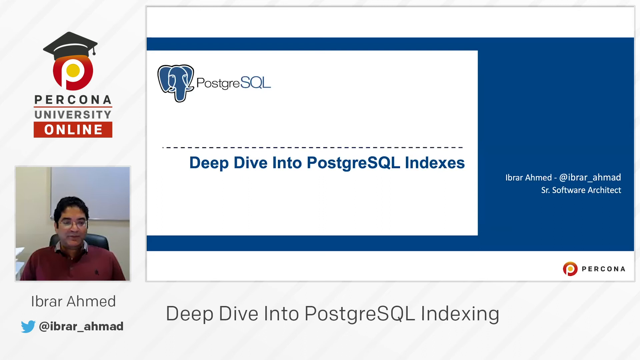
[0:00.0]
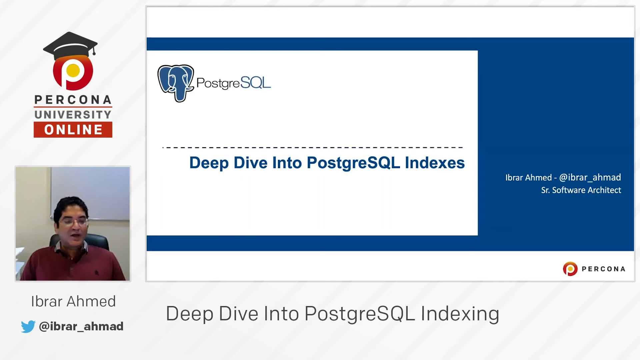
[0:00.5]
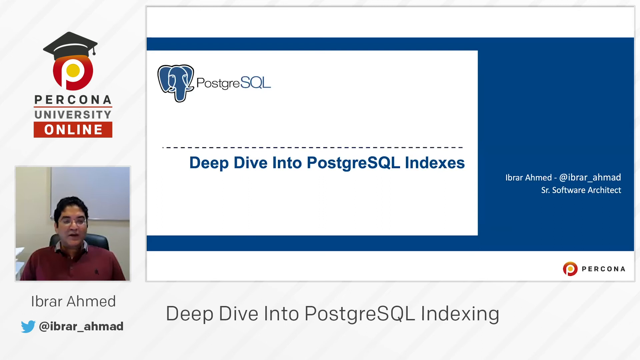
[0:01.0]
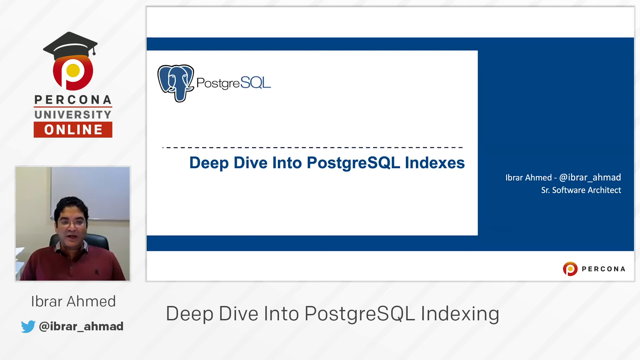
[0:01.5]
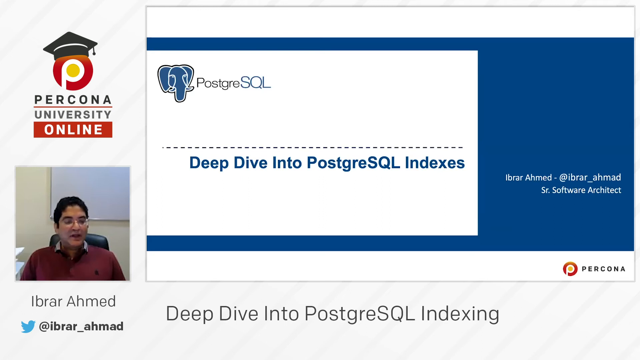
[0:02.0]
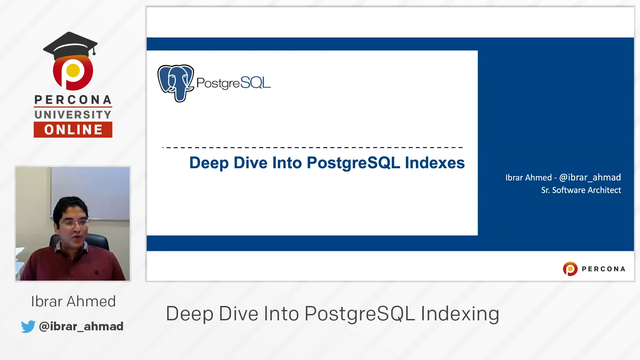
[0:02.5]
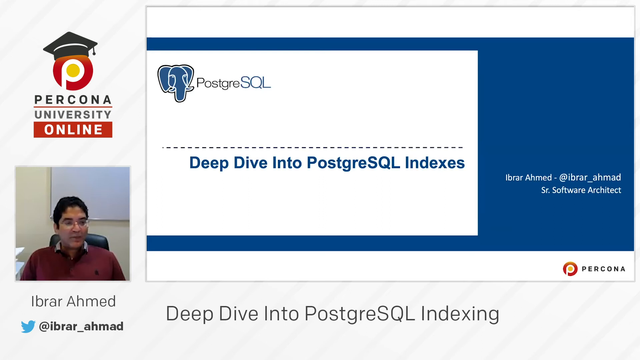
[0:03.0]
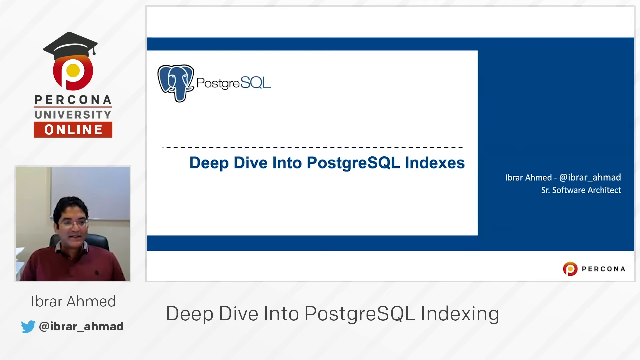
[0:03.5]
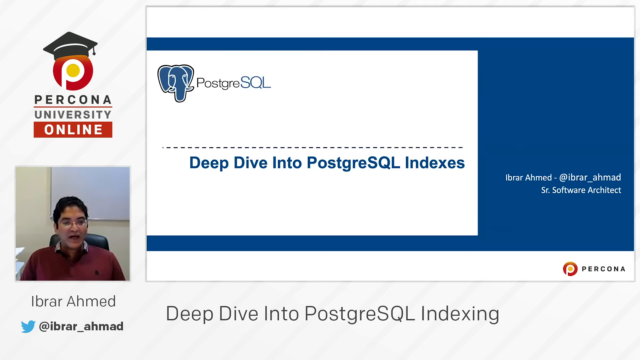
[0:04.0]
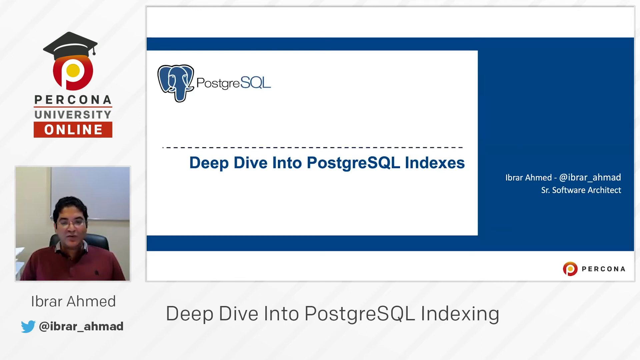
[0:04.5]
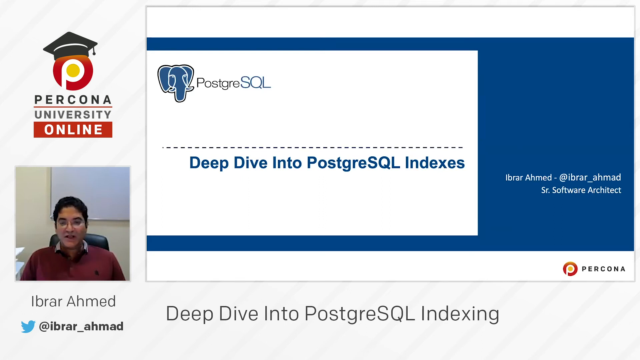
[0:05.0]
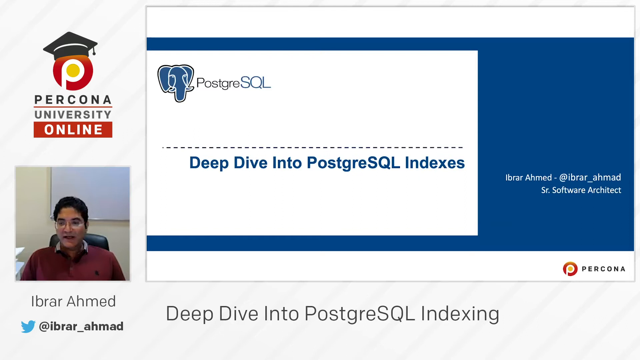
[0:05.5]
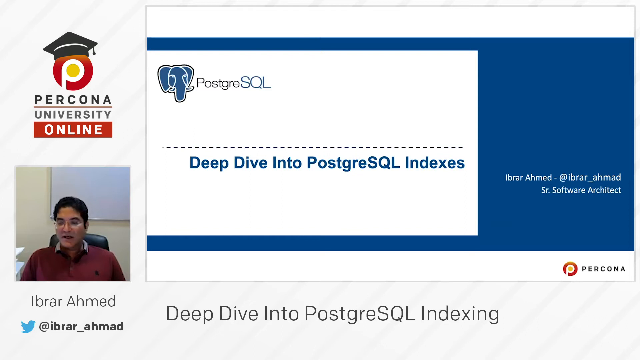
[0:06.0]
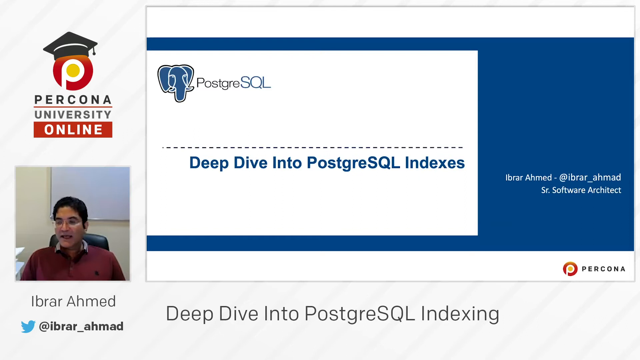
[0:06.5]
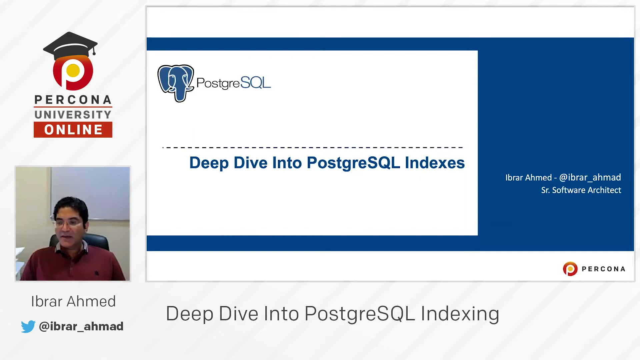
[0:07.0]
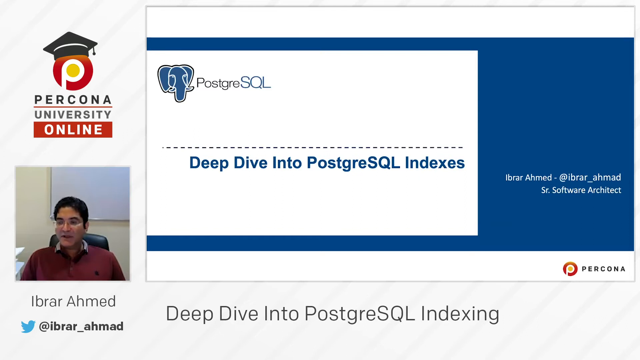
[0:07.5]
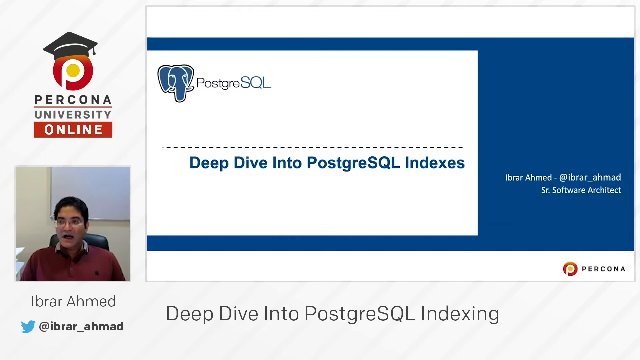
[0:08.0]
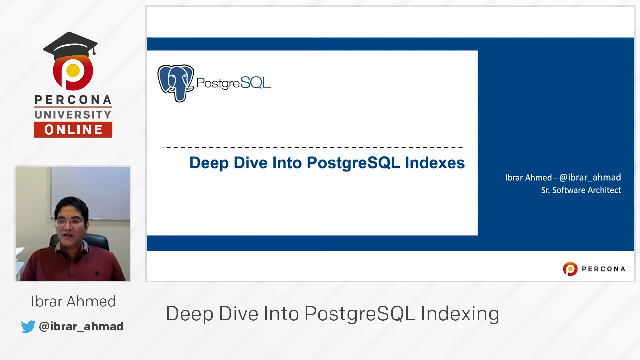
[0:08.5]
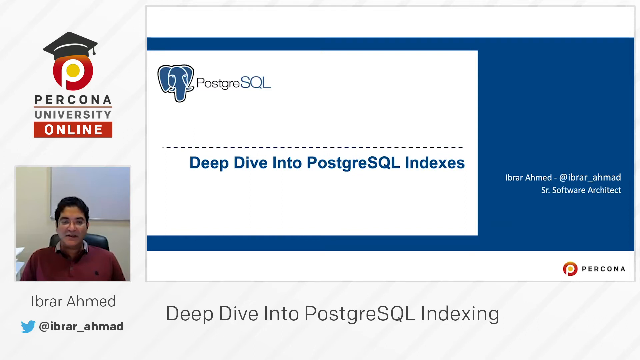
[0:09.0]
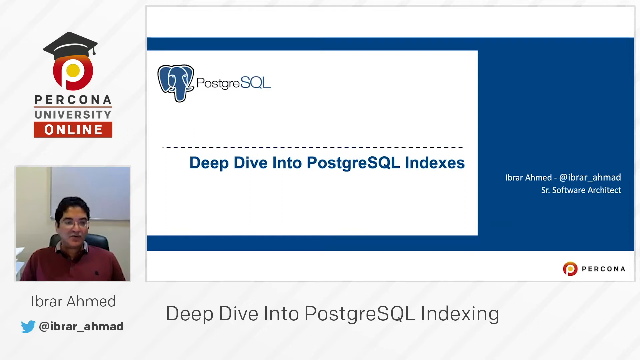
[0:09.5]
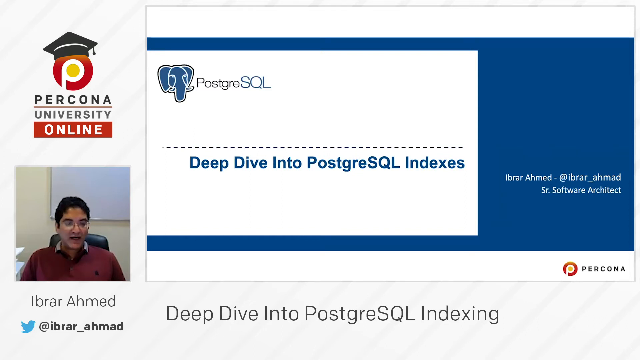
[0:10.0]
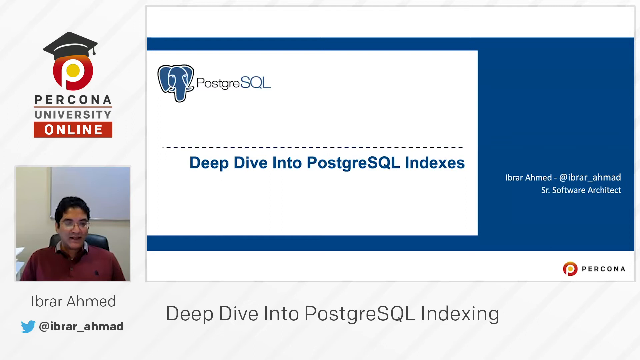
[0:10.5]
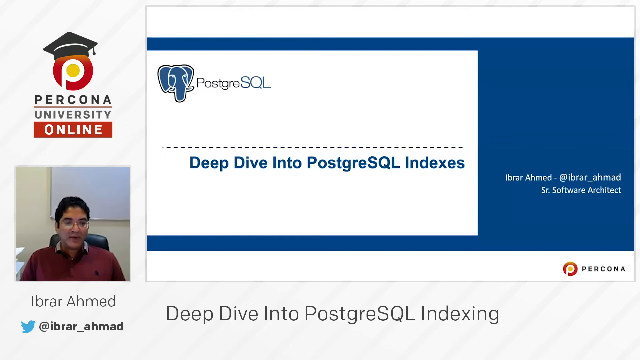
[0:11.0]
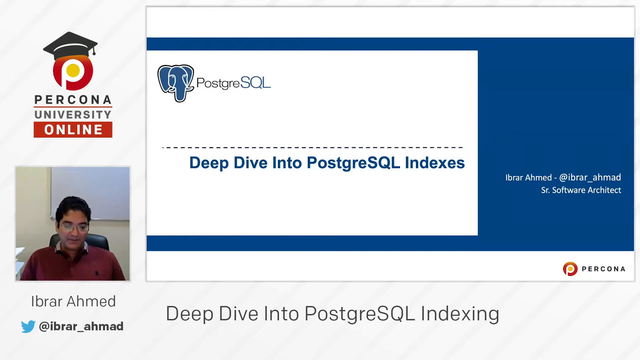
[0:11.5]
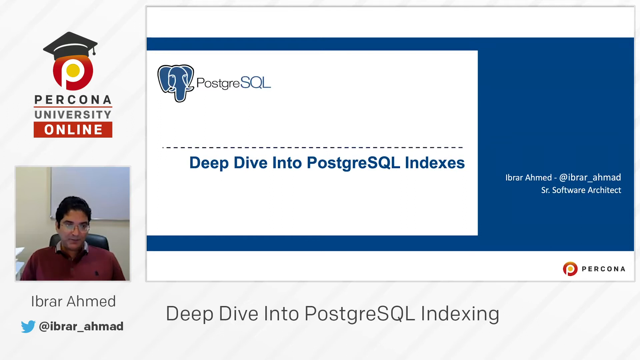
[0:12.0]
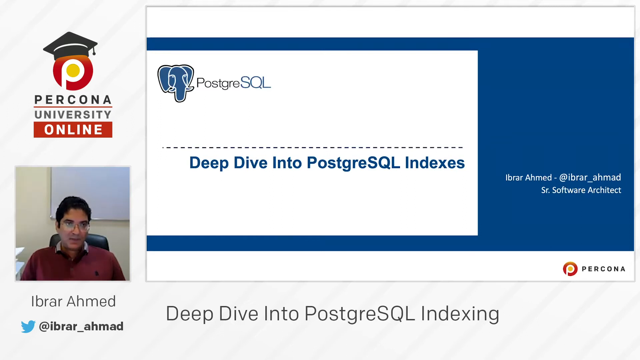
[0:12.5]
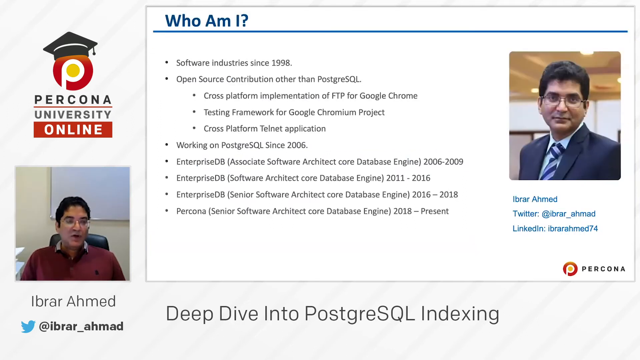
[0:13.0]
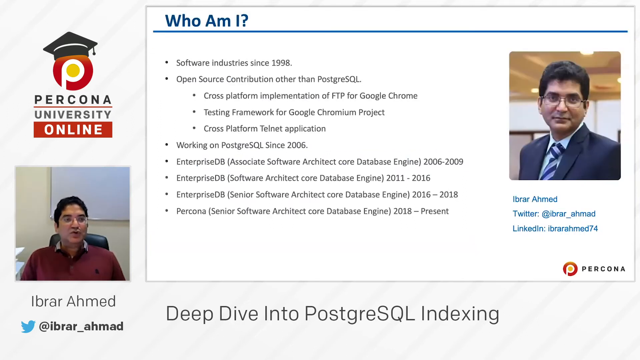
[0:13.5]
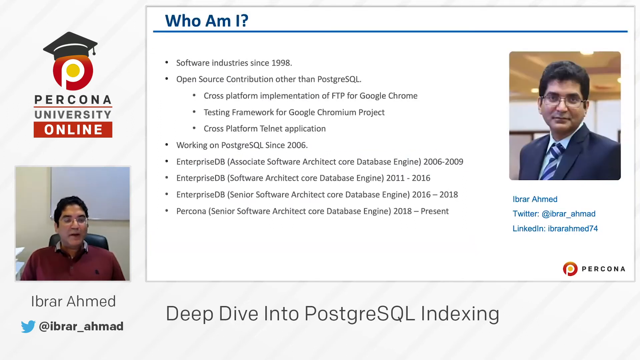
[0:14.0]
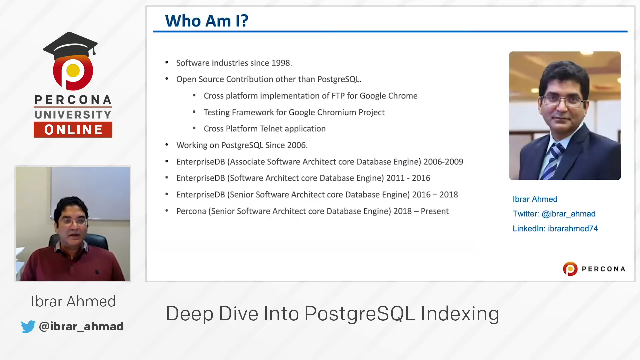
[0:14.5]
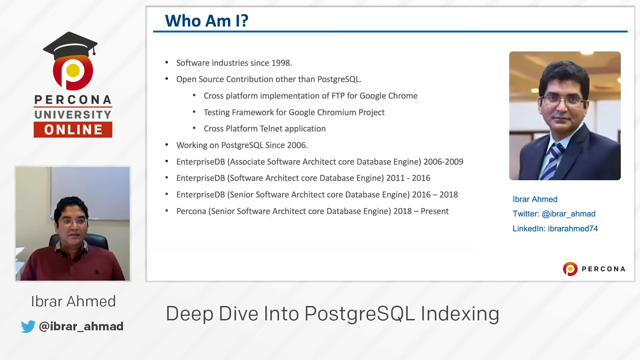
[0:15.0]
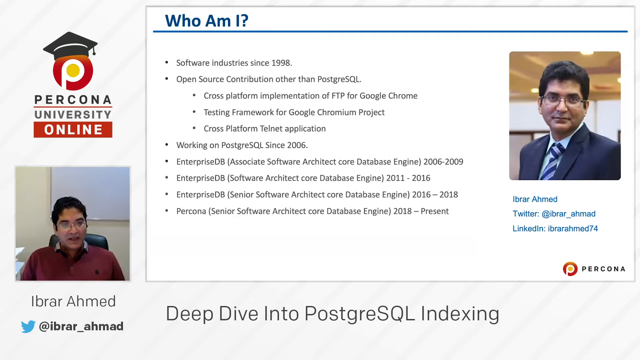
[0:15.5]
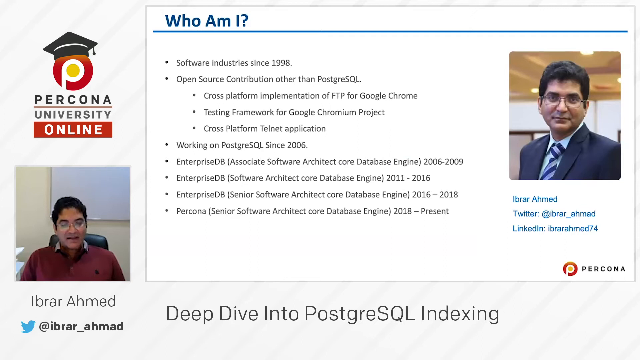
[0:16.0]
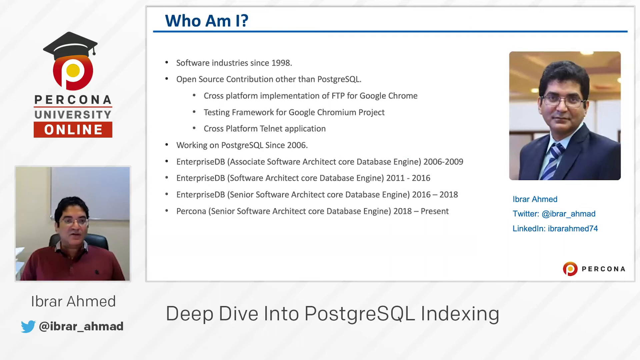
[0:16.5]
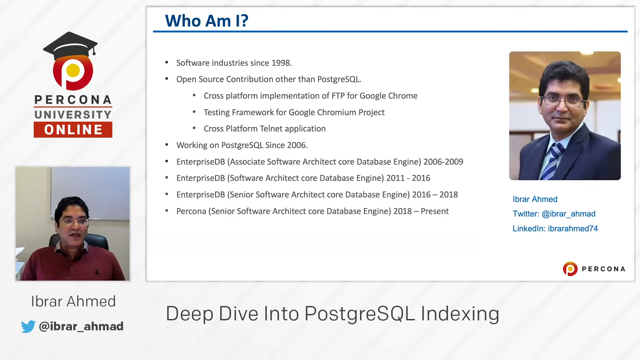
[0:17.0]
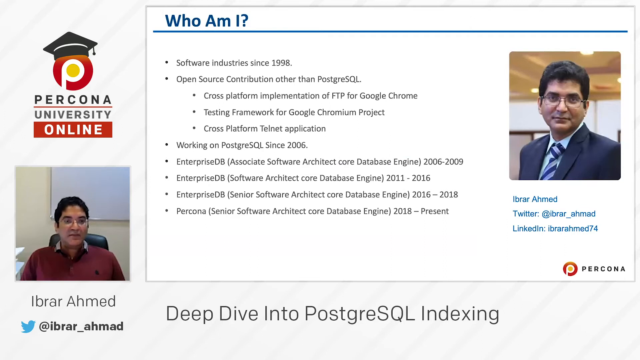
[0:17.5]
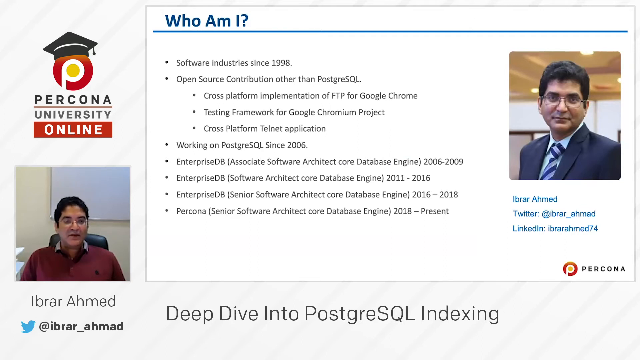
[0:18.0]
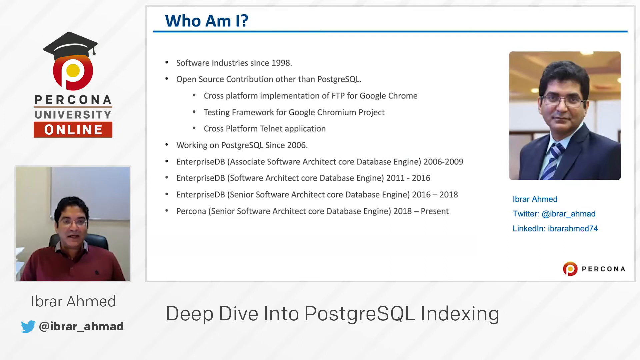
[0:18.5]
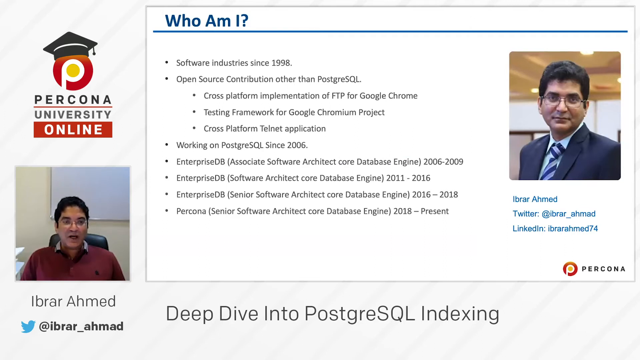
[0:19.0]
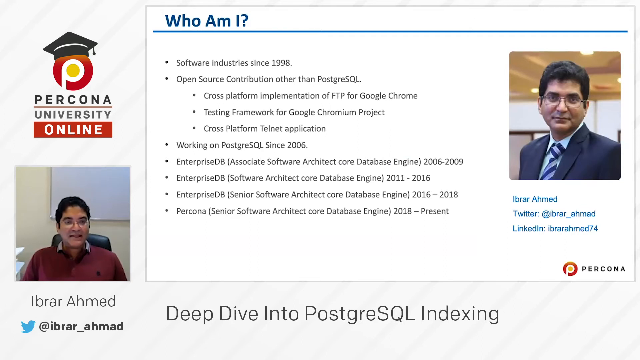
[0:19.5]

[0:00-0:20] A logo shows a red circle with a "p" and a small yellow circle in the center, wearing a graduation hat, beside black text with a red line in between that reads "Percona University." A red banner with white text reads "online." Below is a photograph of a man wearing glasses, with his name, "Ibrar Ahmed," under it, along with the Twitter bird logo and his Twitter credentials, "at Ibrar_Ahmed." A white and blue screen shows an elephant with black and blue text reading "PostgreSQL," and blue dashed lines with bold blue text reading "deep dive into PostgreSQL indexes." White text next to that reads "Ibrar Ahmed at Ibrar_Ahmed senior software architect." A title reads "deep dive into PostgreSQL indexing," and the man on the left talks while looking at the camera. Another screen pops up with "who am I" in blue text and a large blue line, followed by bullet points reading "software industry since 1998, open-source contribution other than PostgreSQL, cross-platform implementation of FTP for Google Chrome, testing framework for cross-platform Telnet application, working on PostgreSQL since 2006, Enterprise DB associate software architect, Core Database Engine 2006 to 2009, Enterprise DB software architect, Core Database Engine 2011 to 2016, Enterprise DB senior software architect, Core Database Engine 2016 to 2018, and Percona senior software architect, Core Database Engine 2018 to present." A photo of him appears with blue text reading "Ibrar Ahmed, Twitter at Ibrar_Ahmed, LinkedIn, Ibrar Ahmed, 74." The man continues to talk.